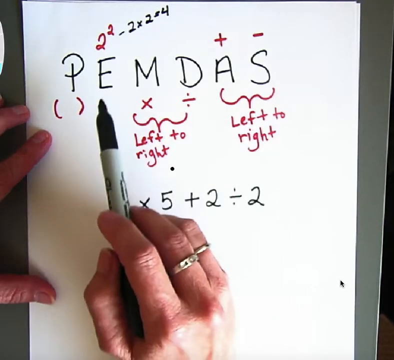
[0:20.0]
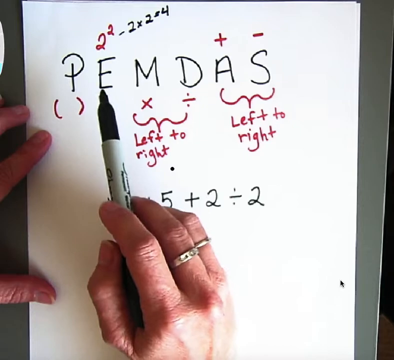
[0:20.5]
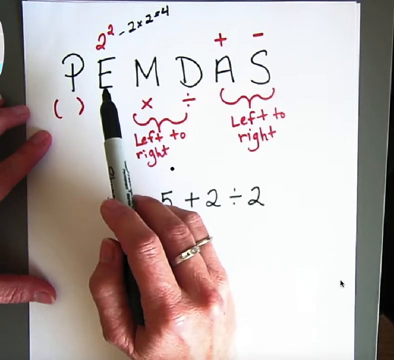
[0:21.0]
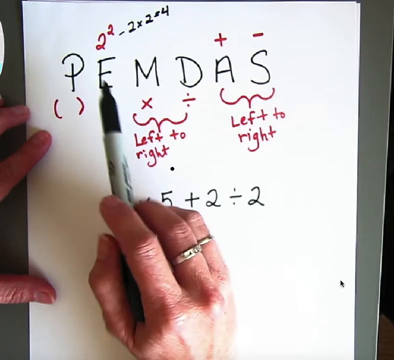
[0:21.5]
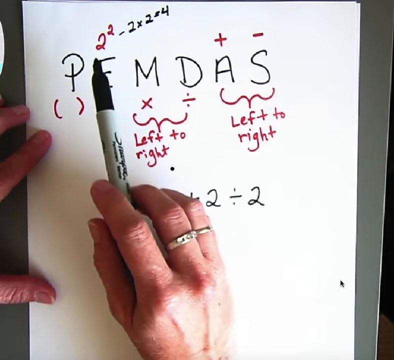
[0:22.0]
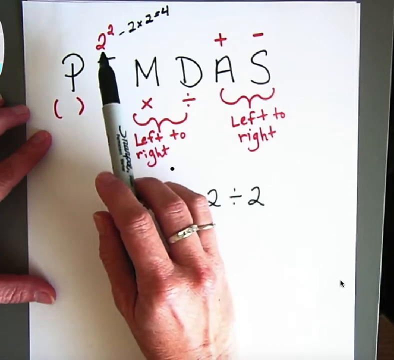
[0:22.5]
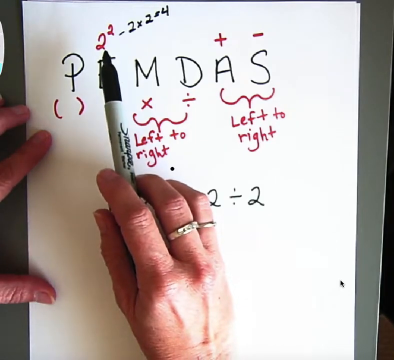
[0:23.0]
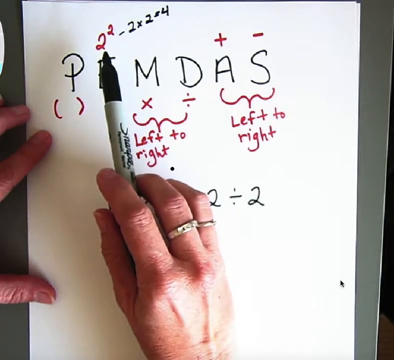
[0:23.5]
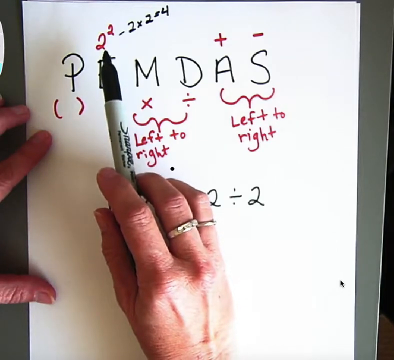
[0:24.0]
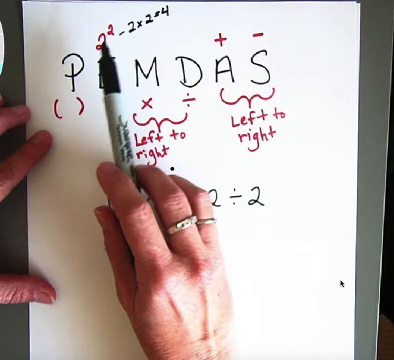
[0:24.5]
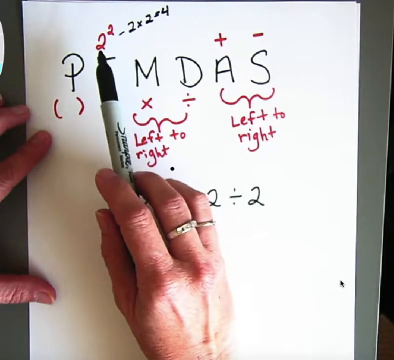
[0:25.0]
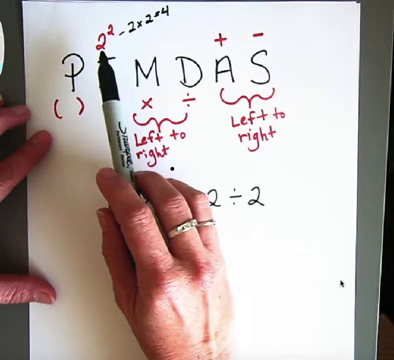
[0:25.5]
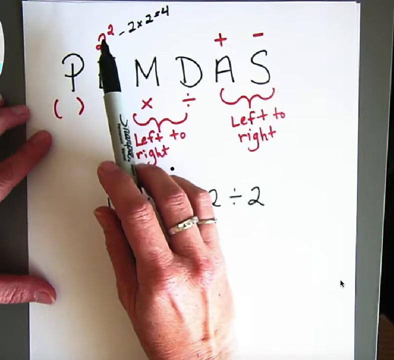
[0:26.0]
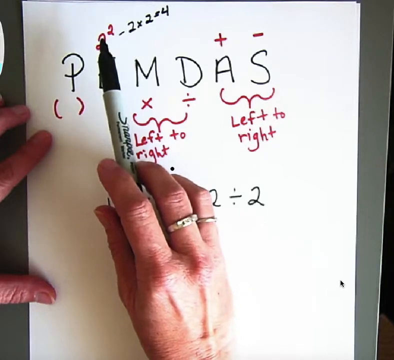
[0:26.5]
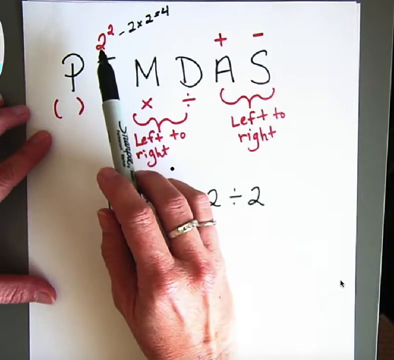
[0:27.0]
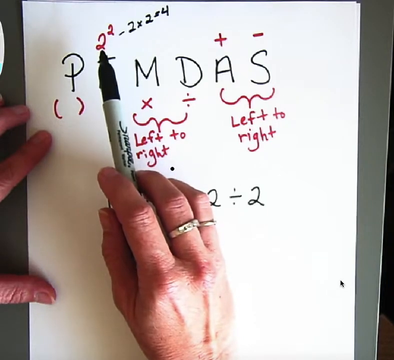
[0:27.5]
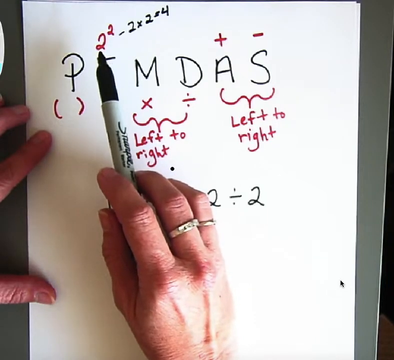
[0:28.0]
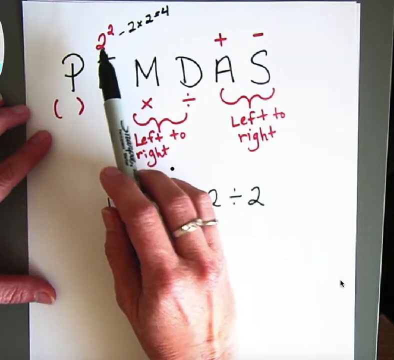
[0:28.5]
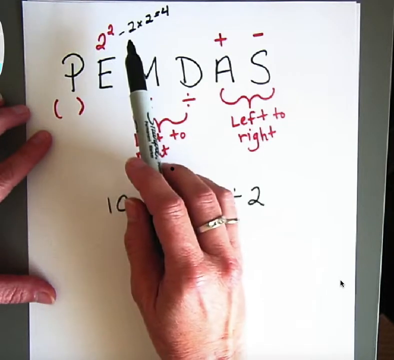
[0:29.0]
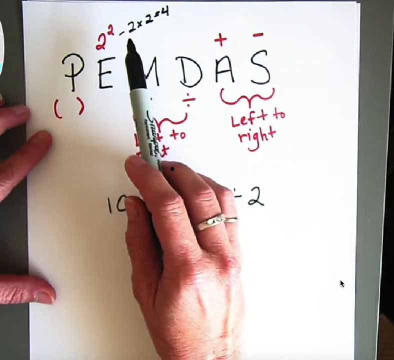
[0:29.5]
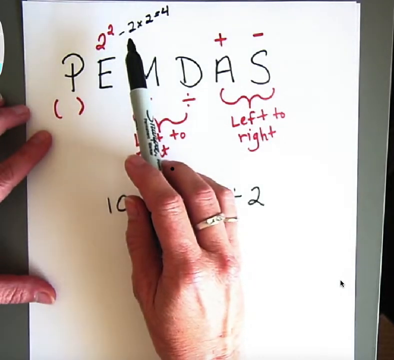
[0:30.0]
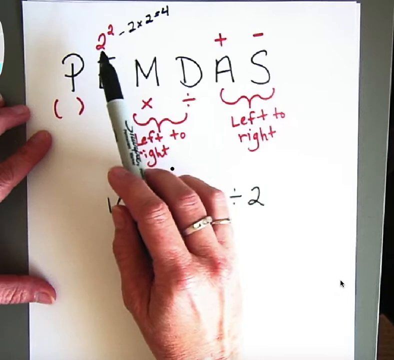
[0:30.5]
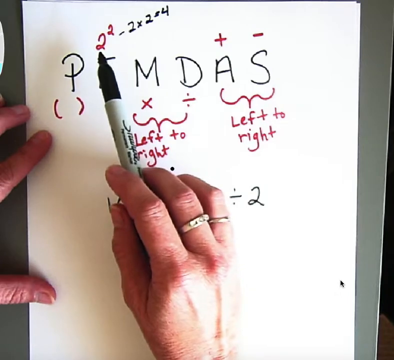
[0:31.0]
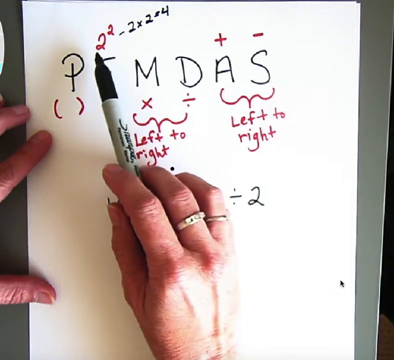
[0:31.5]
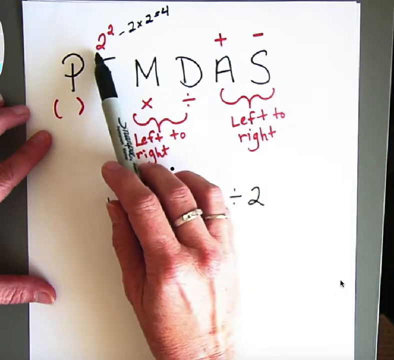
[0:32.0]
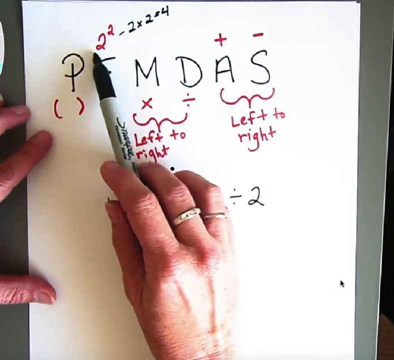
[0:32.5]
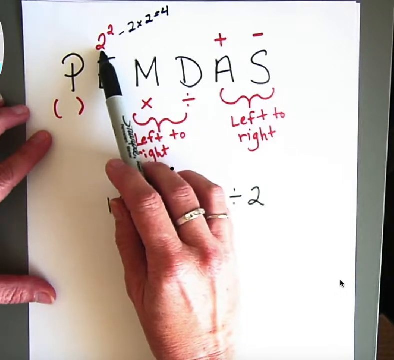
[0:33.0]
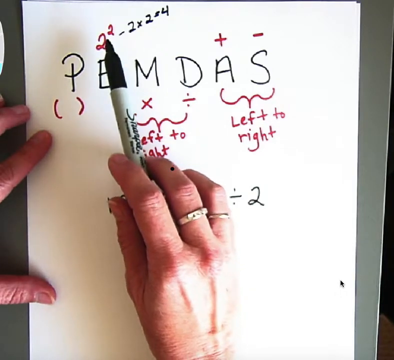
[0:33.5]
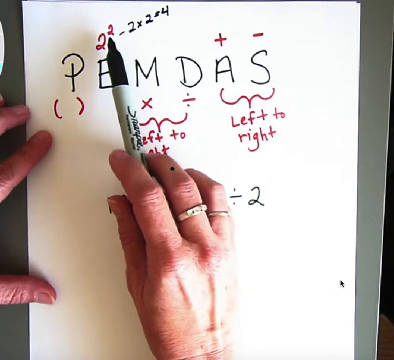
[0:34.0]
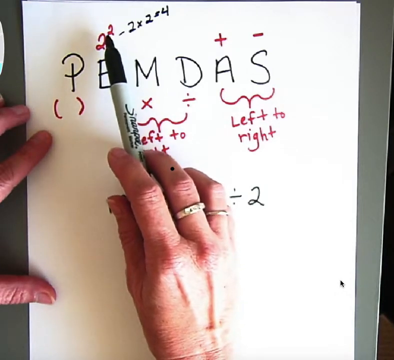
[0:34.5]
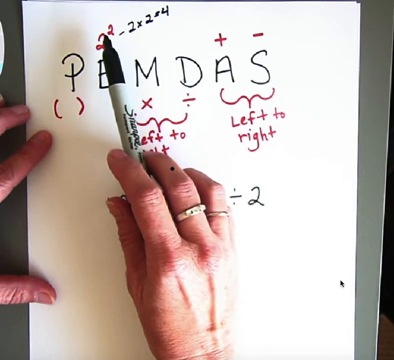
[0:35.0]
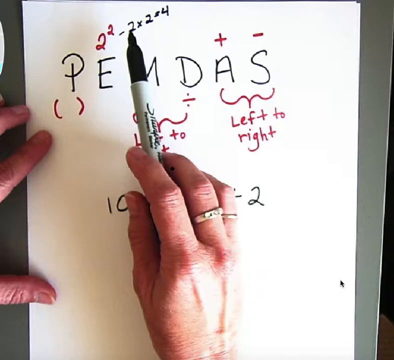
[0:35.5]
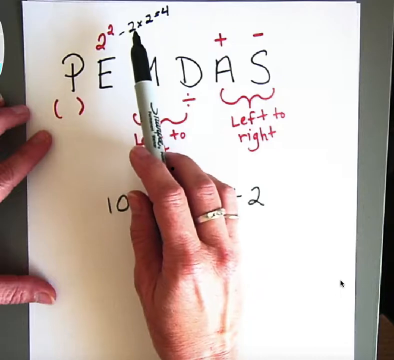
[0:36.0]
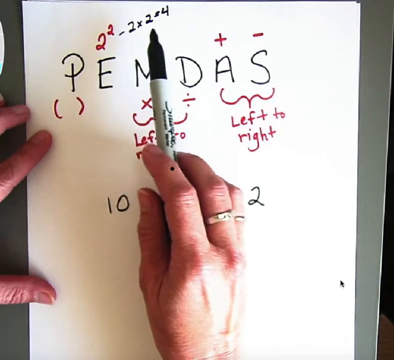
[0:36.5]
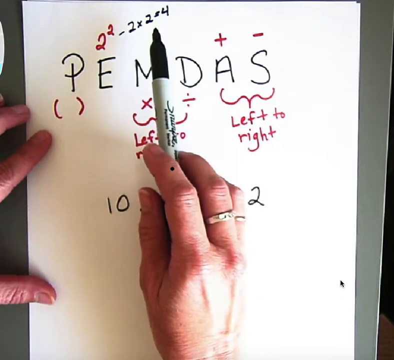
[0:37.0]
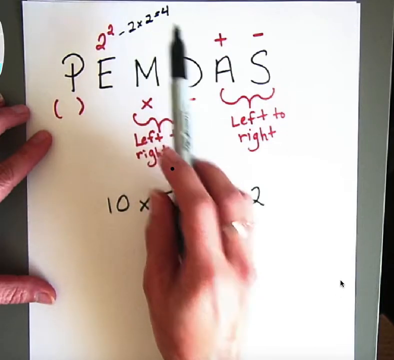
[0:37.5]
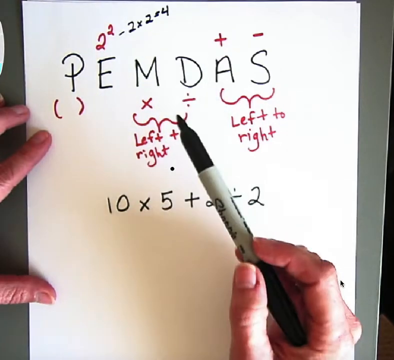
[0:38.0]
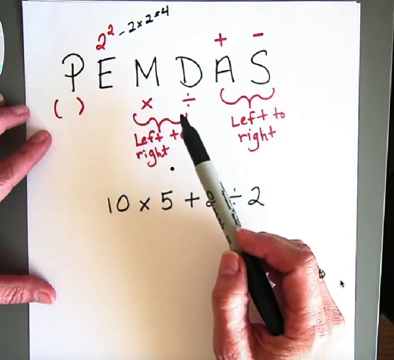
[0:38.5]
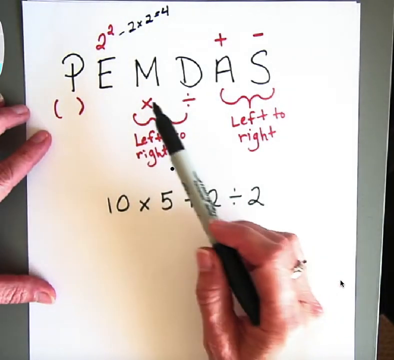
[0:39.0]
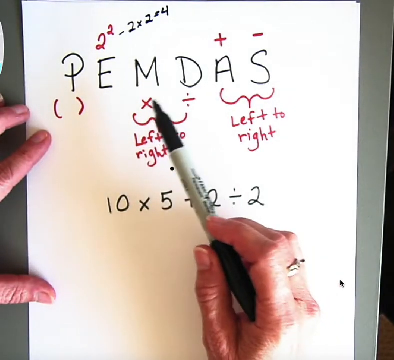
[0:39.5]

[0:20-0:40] A white piece of paper has a formula on it. Written in black capital letters across the top of the paper is "PEMDAS", with some space between each letter. On top of the E is a 2 to the second power written in red, and beside it in black is minus 2 times 2 equals 4. Over the capital A is a plus sign and over the capital S is a minus sign. Under the capital P is a red parenthesis symbol, either one or two. Under the capital M is an X and under the D is a division sign. Under those two symbols a wiggly sign points to the statement "left to right", and under the capital A and capital S another wiggly sign points to "left to right". The person's hand rests on the paper holding a black marker. The person points to the E, then to the red 2 to the second power, pointing at it a couple of times, then points to the rest of the equation and back to the 2 to the second power. The hand rests on the left side, then the person points to the M and the D, and the hand comes back to the capital E.